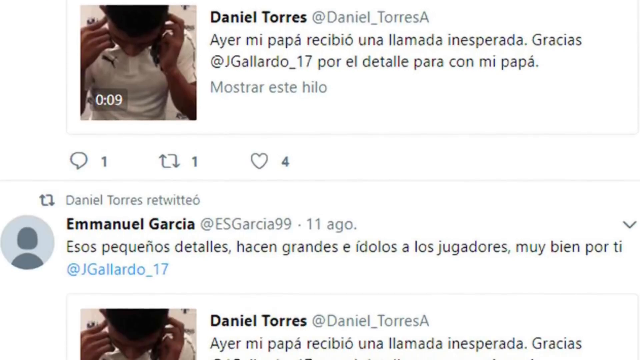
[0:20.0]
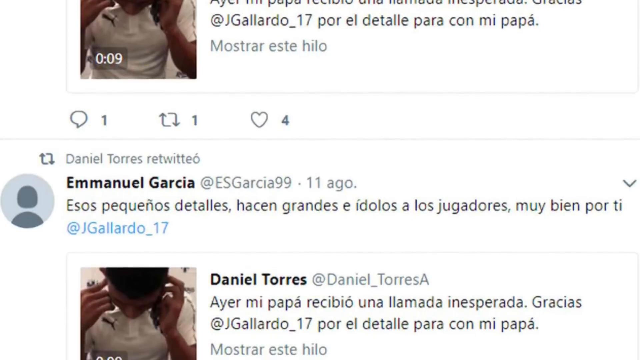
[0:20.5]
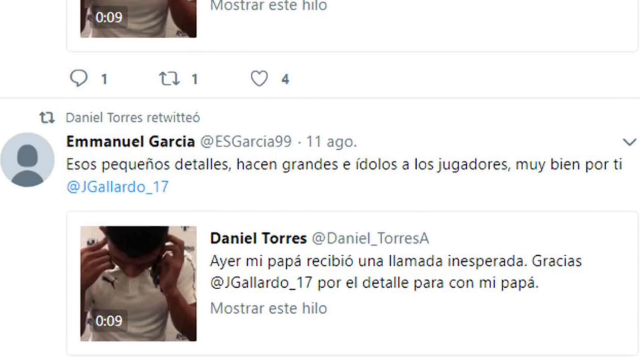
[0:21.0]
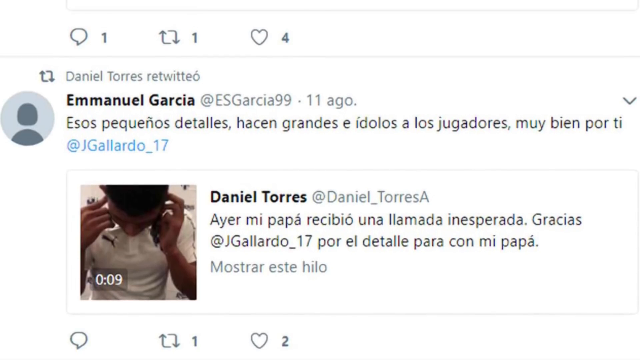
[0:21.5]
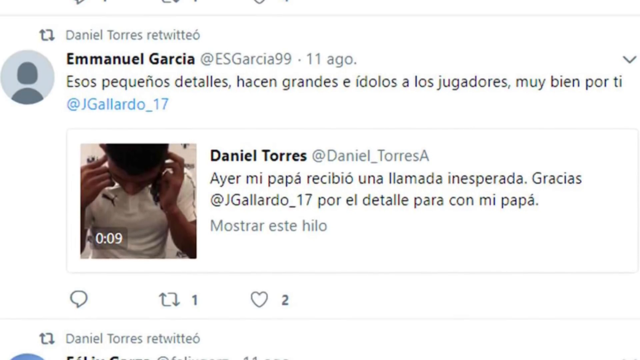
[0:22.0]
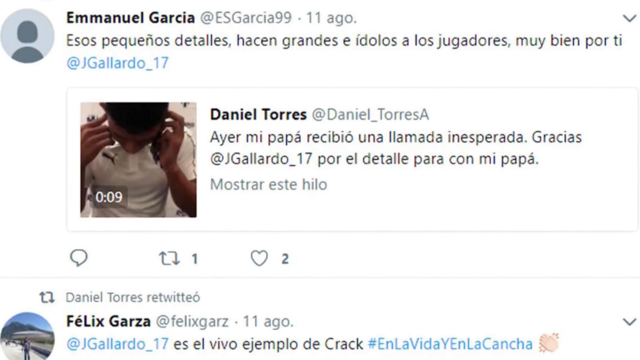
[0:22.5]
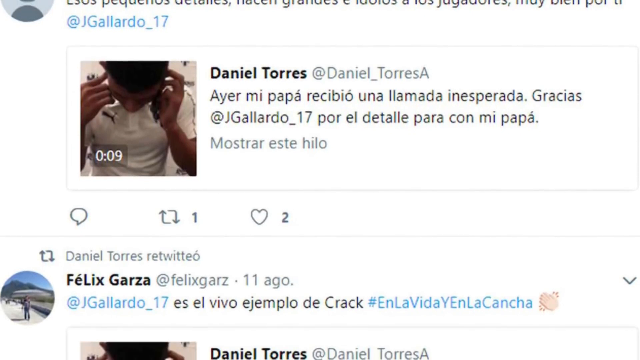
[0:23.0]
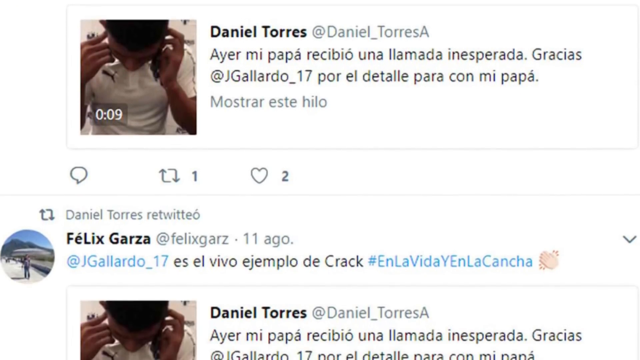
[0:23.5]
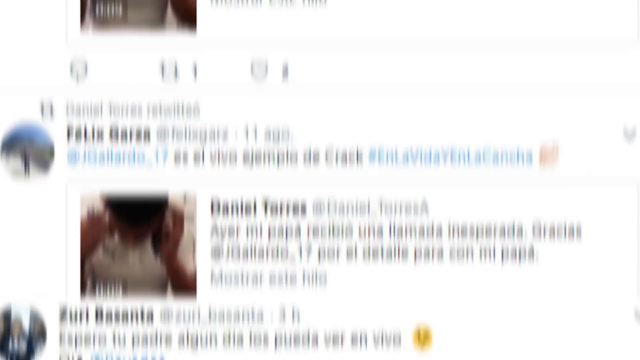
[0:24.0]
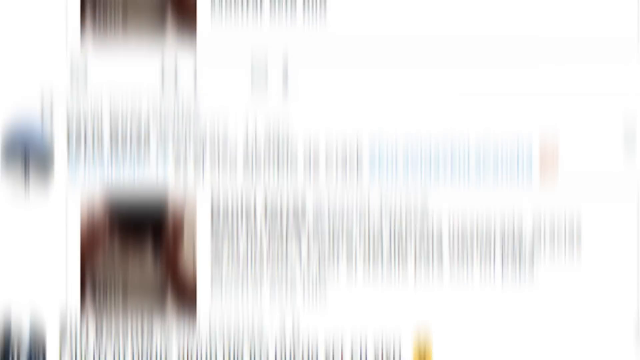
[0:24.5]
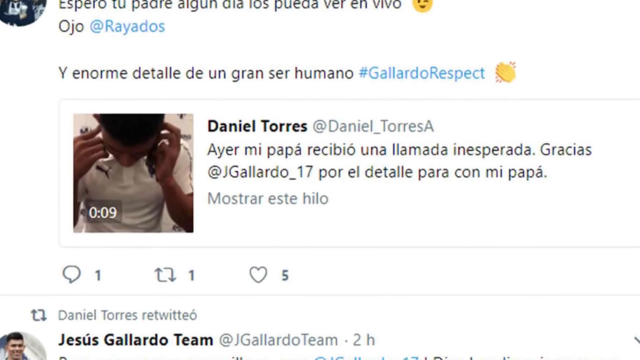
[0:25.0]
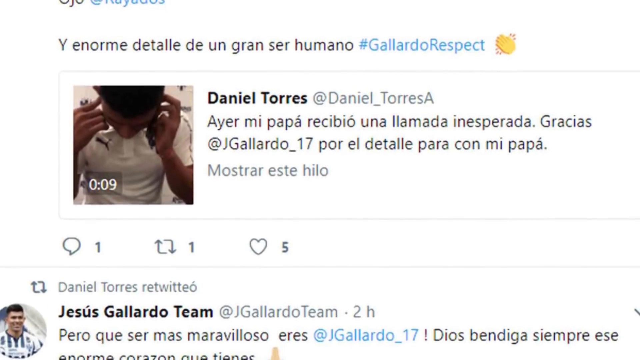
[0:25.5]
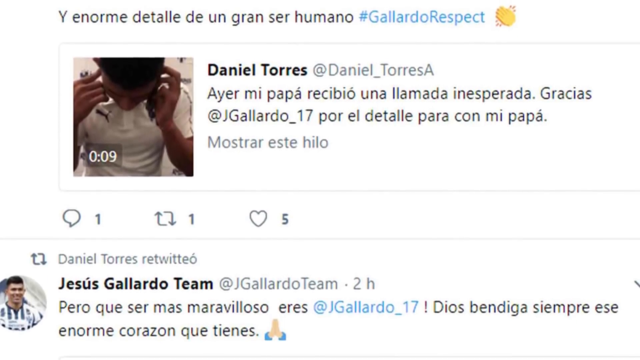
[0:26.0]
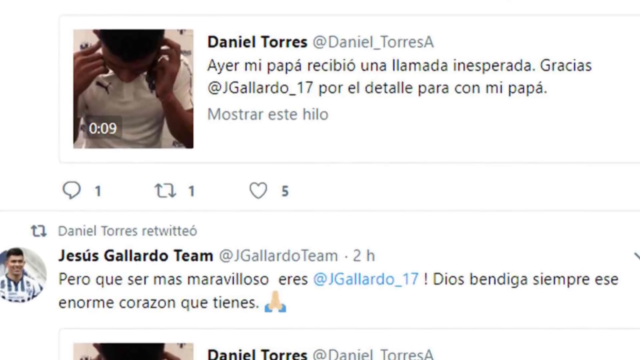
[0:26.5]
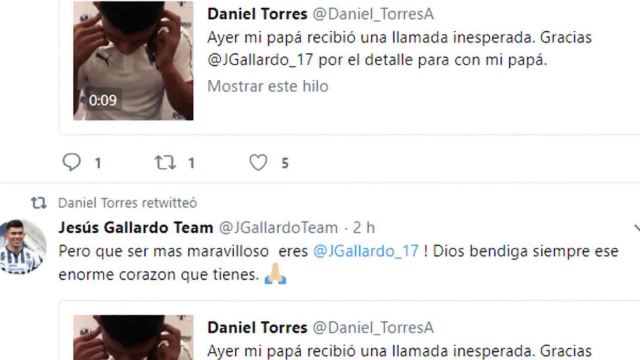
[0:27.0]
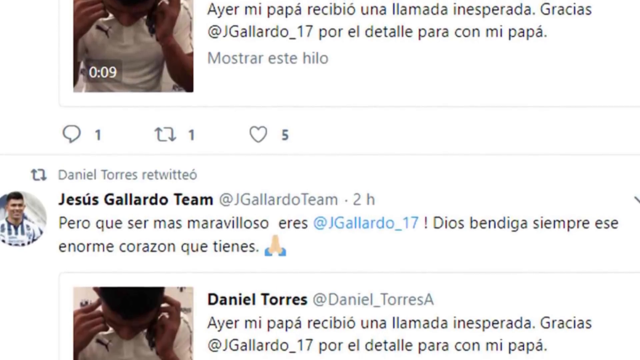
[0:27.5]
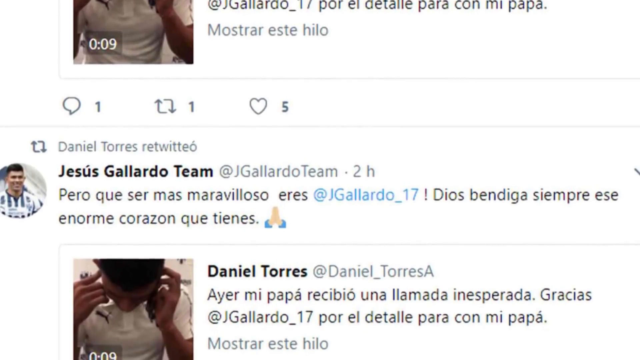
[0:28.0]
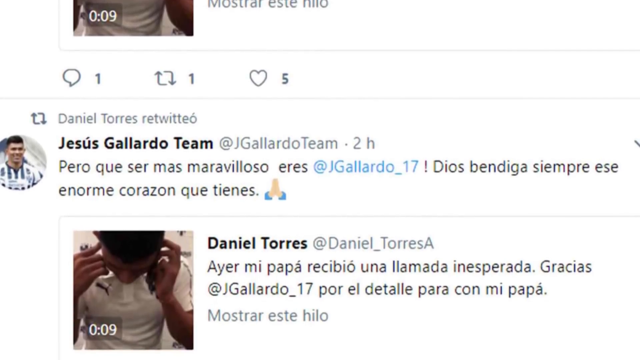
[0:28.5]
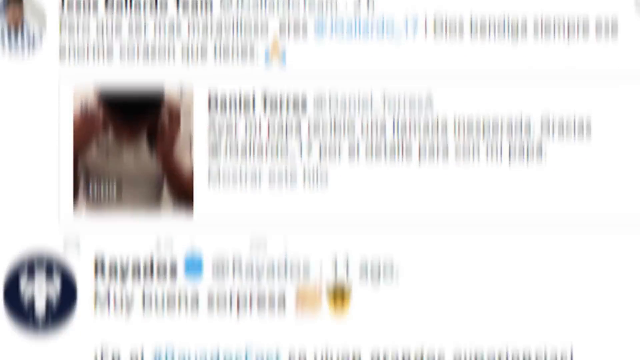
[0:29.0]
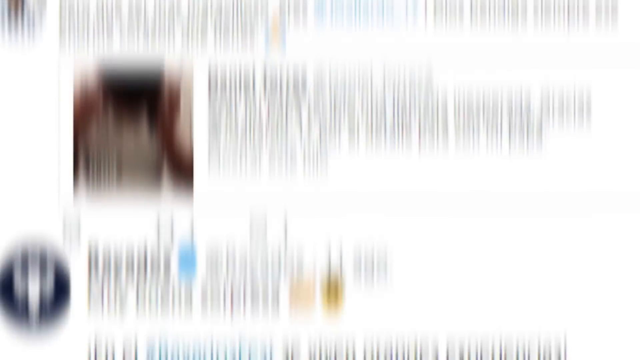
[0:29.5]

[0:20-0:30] A number of tweets from Twitter scroll past, written in Spanish. The video rapidly accelerates as the tweets scroll down, and different logos appear during the scrolling. One picture shows a man on a telephone with one hand up to his head and the other holding the phone close to his ear, along with the name "Daniel Torres" and some writing in Spanish. The tweets keep scrolling down rapidly, showing tweets from other players, also written in Spanish, with messages to the player pictured on the phone.